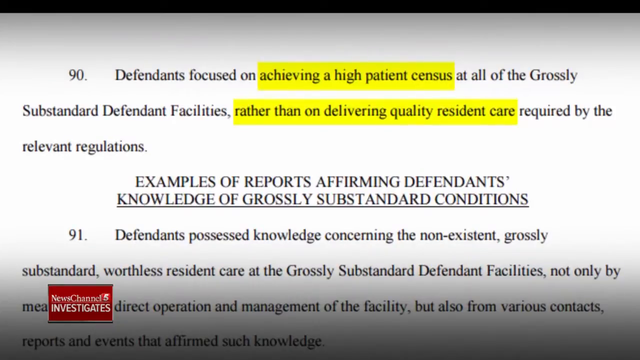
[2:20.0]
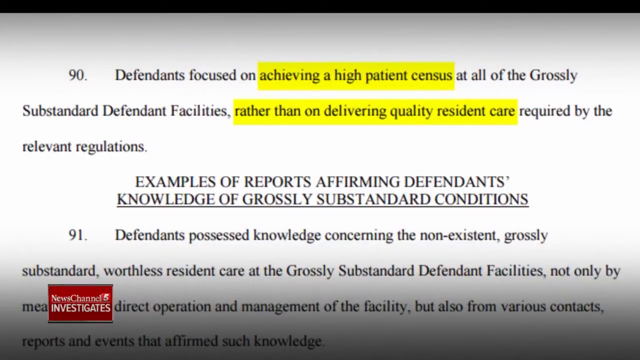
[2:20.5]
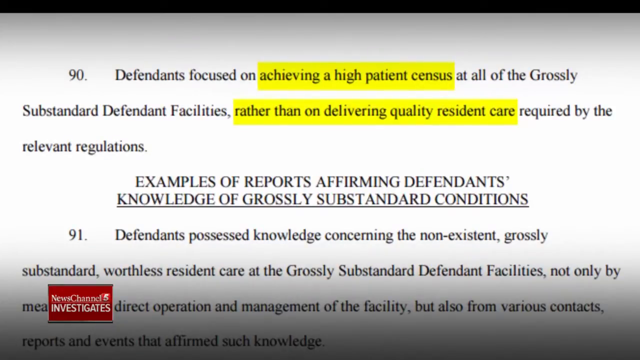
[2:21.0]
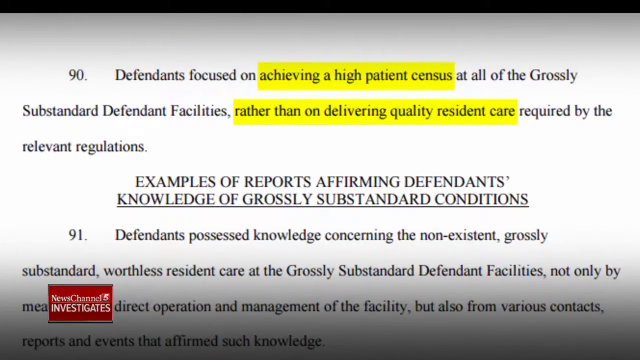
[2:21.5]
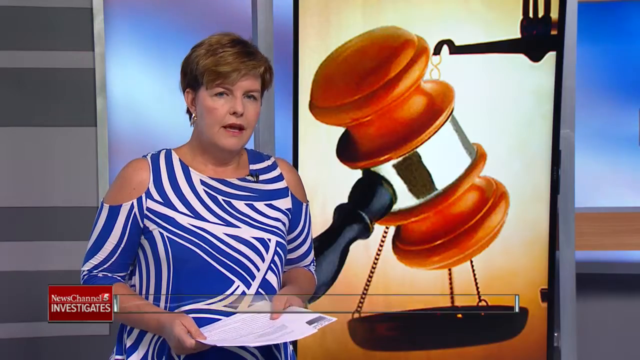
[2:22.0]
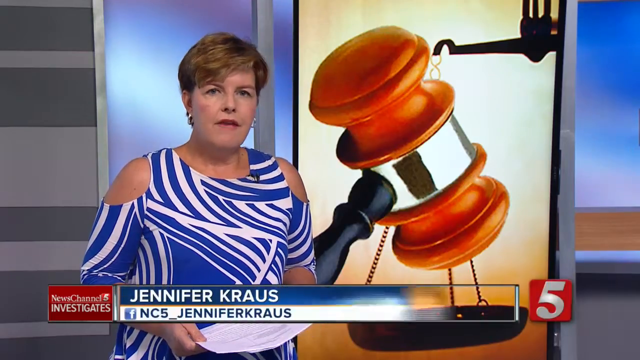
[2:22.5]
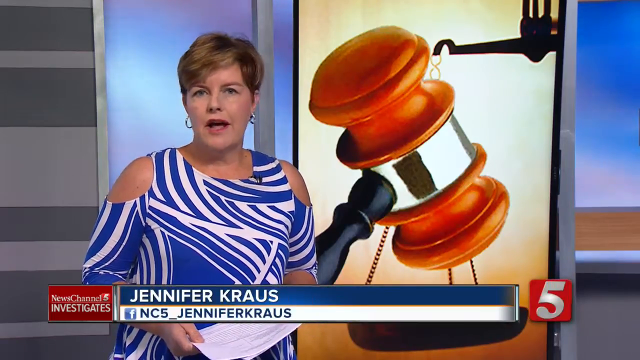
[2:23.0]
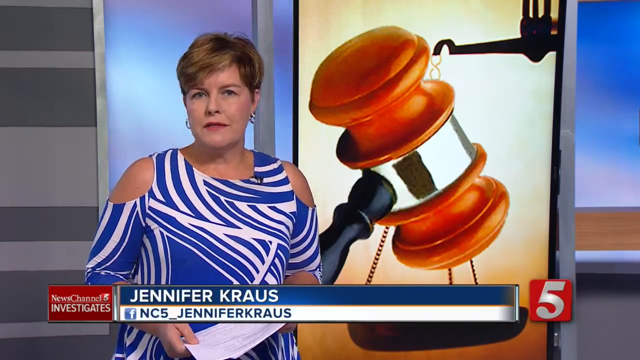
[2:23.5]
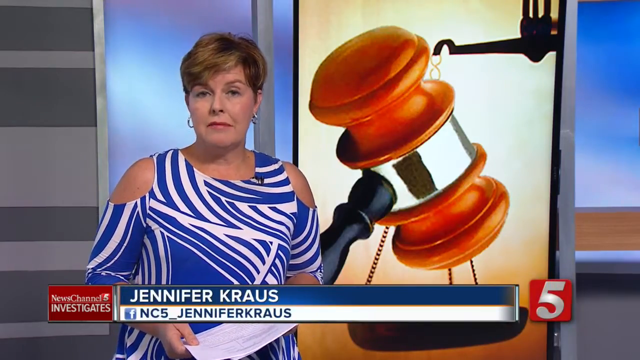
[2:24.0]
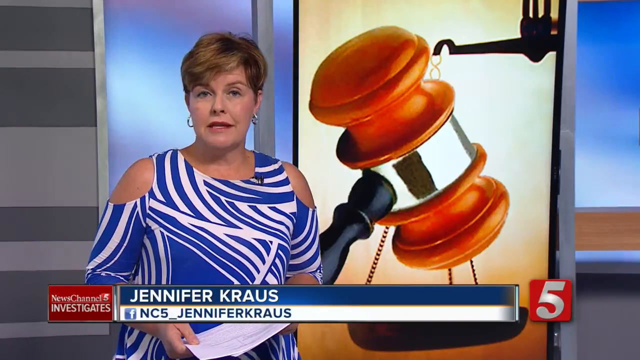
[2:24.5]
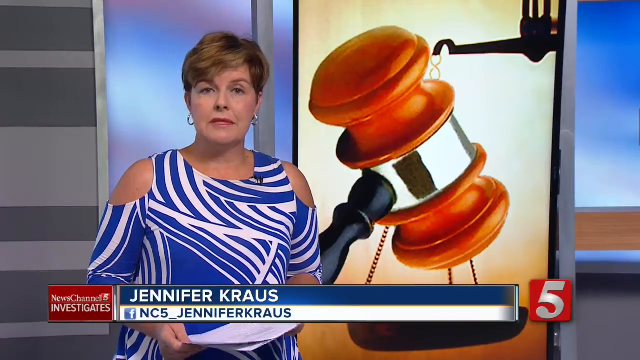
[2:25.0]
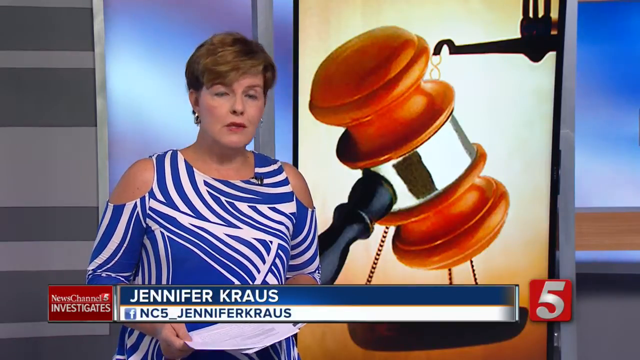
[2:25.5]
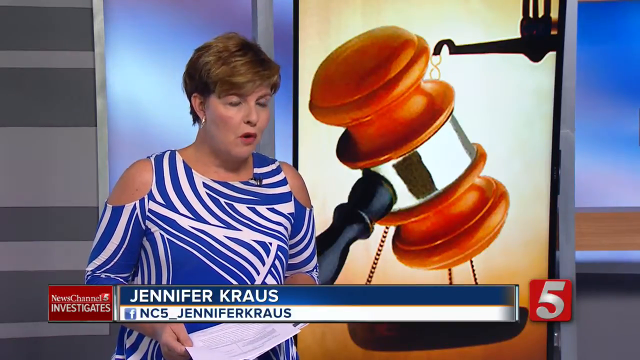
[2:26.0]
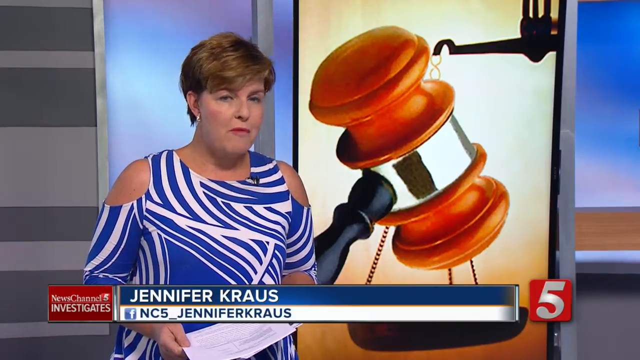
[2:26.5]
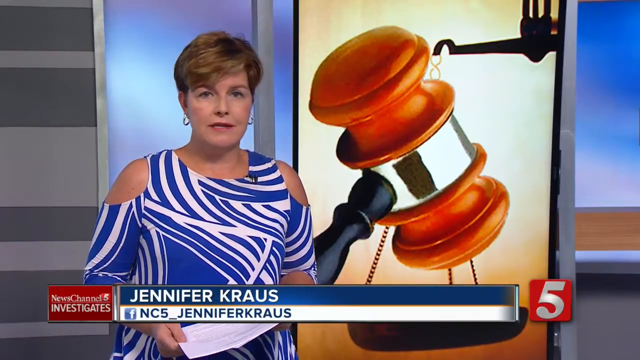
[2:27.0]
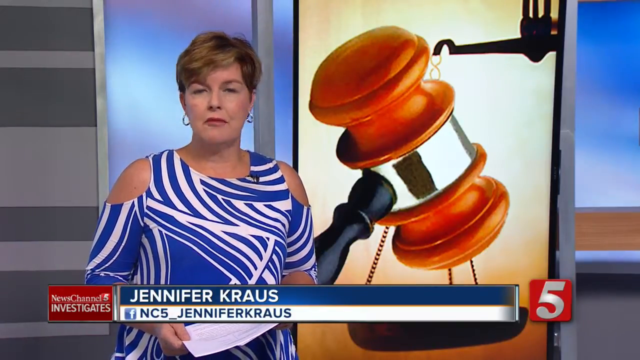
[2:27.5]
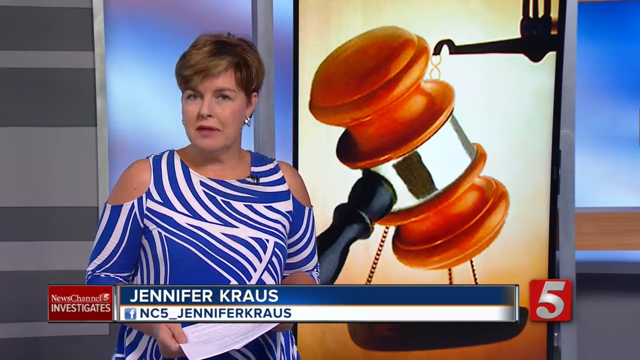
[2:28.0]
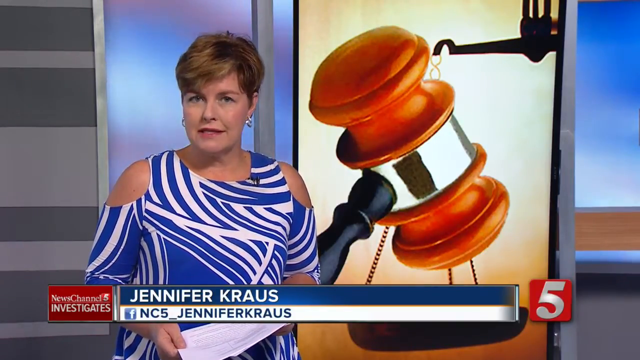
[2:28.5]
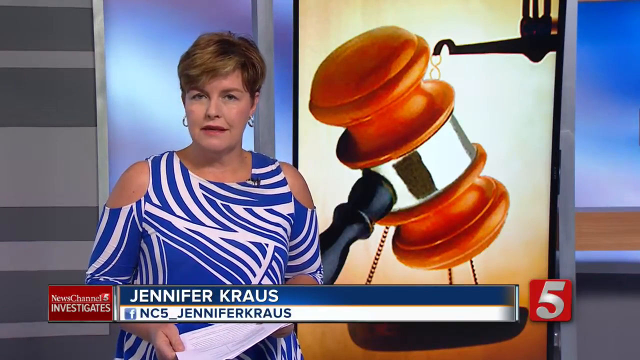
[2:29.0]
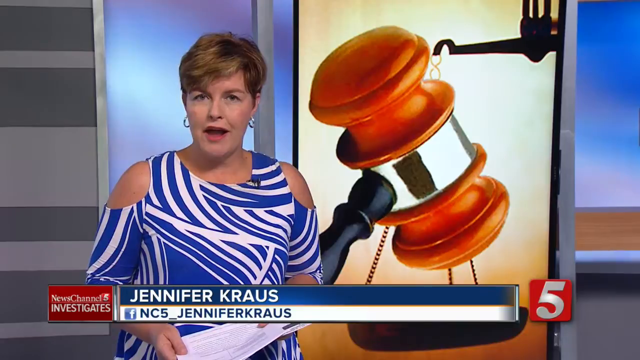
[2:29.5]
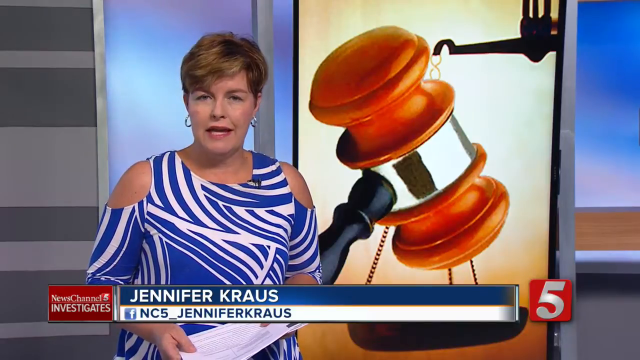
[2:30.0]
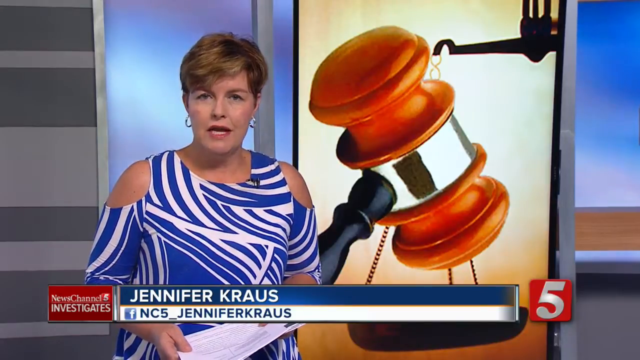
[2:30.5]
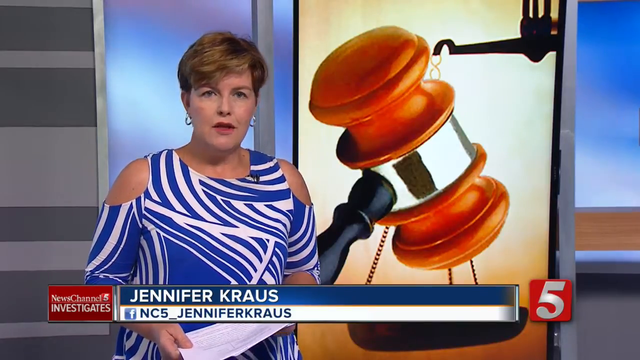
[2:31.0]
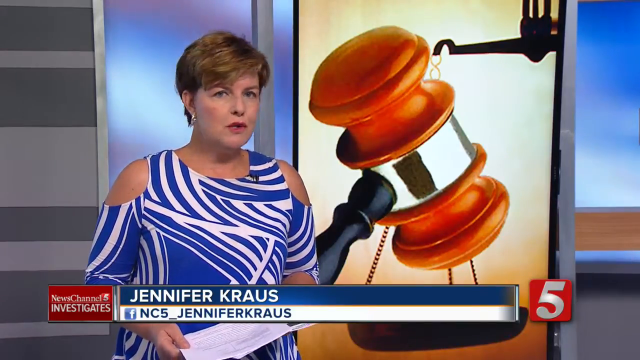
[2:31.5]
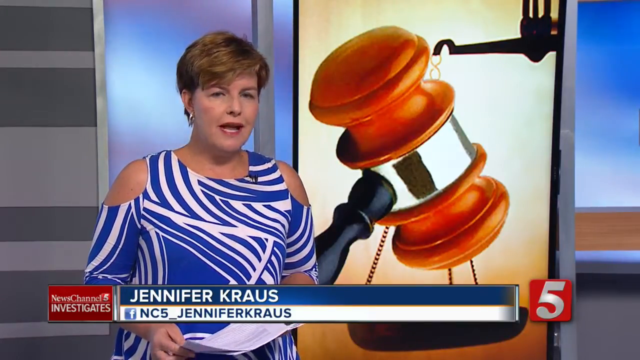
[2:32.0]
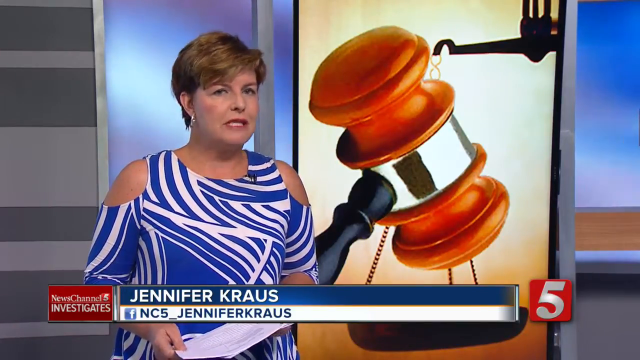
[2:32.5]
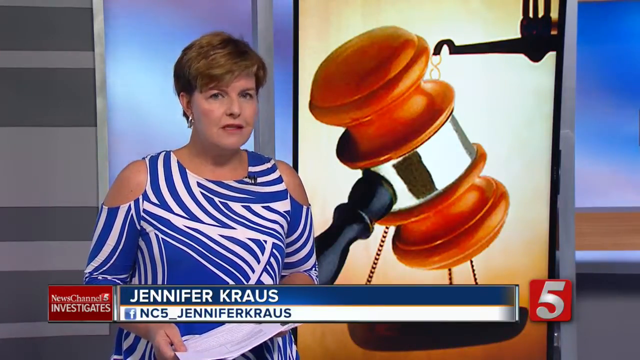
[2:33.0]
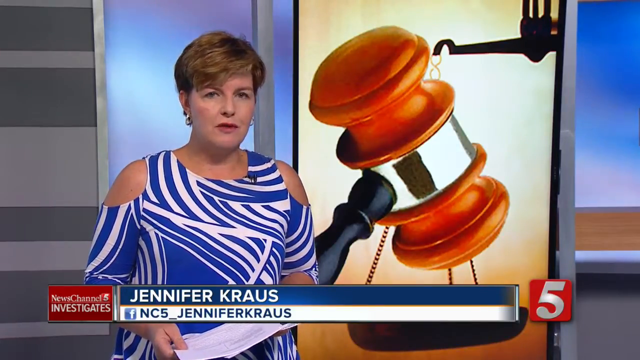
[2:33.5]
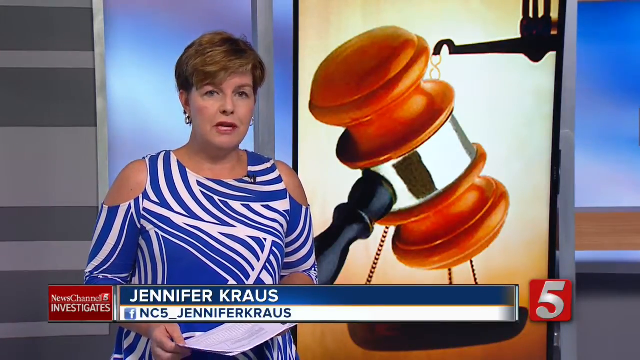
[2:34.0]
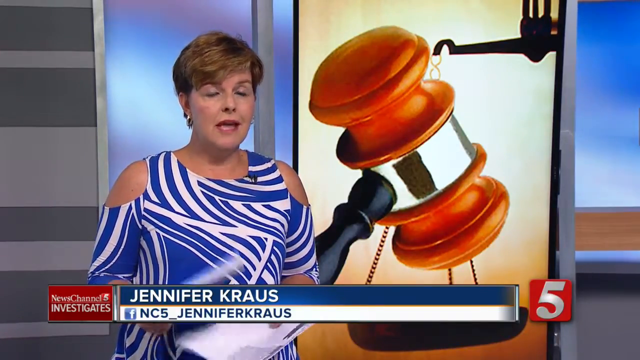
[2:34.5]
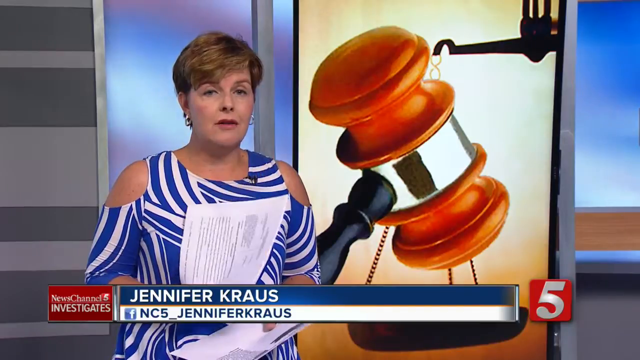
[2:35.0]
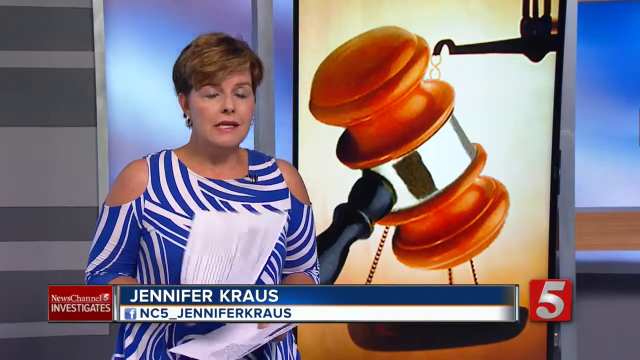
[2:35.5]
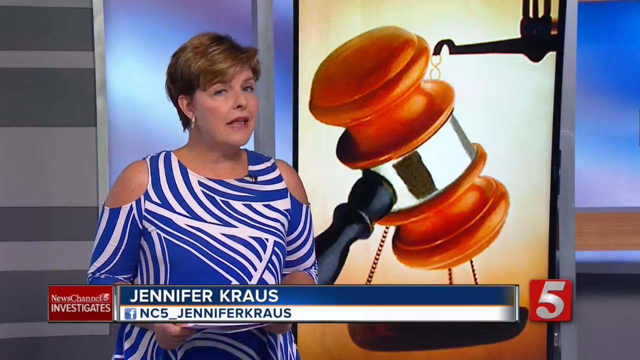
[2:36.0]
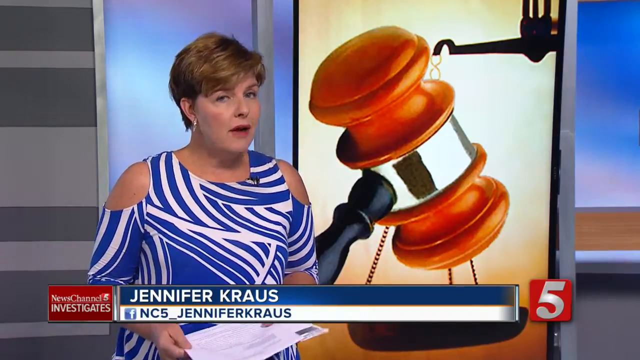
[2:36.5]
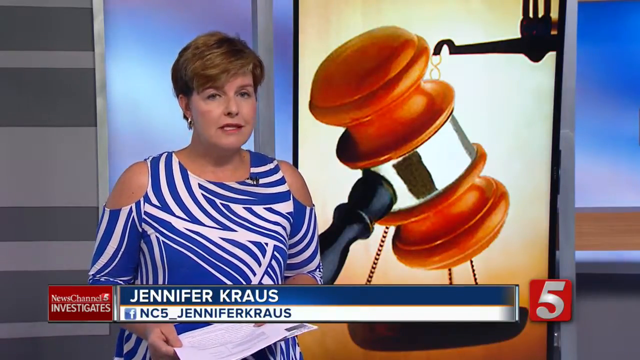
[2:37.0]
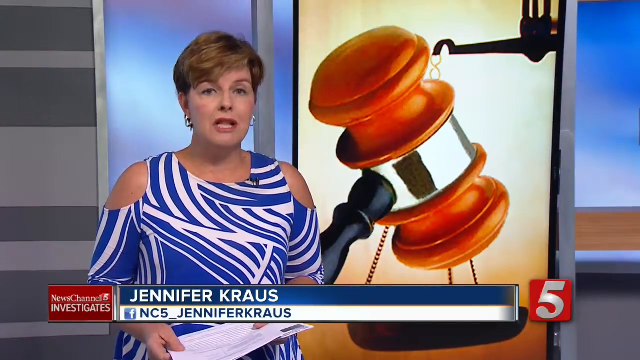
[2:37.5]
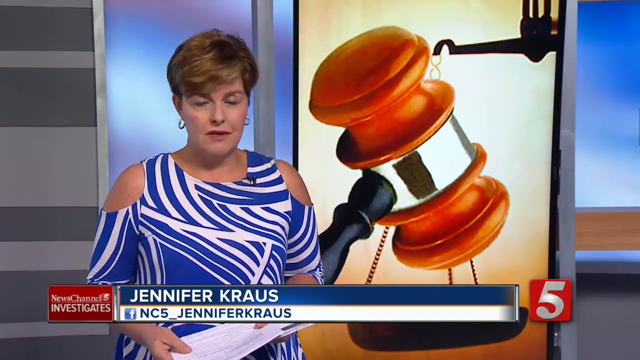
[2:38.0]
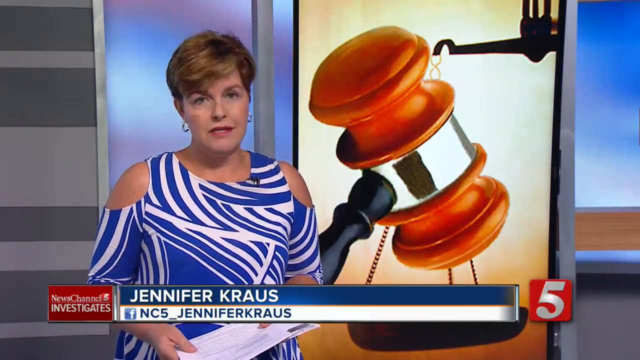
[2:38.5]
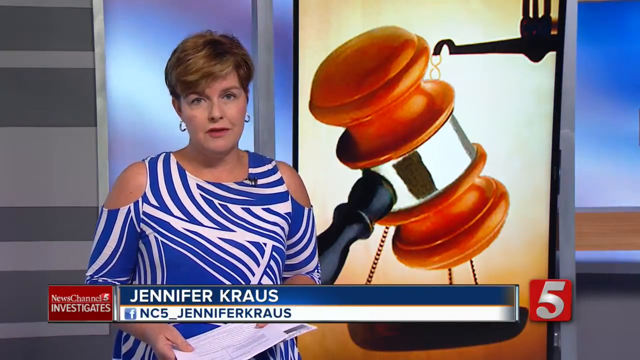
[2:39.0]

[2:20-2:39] The court document states that the defendants focused on achieving a high patient census at all of the grossly substandard defendant facilities rather than on delivering the quality resident care required by the relevant regulations. The video then switches back to the reporter, Jennifer Krause, who is speaking.